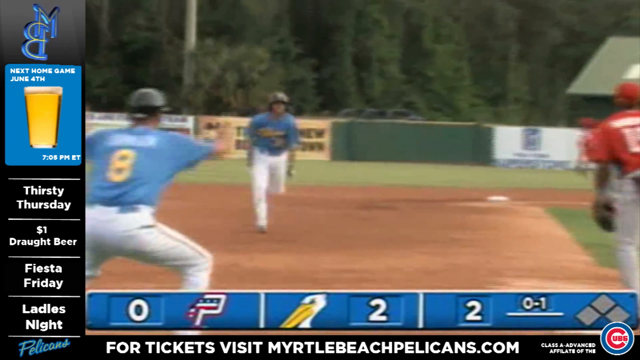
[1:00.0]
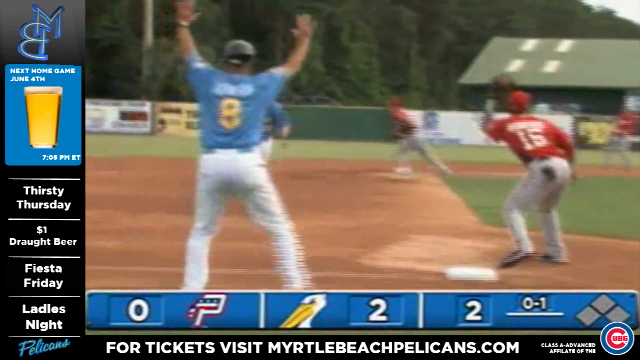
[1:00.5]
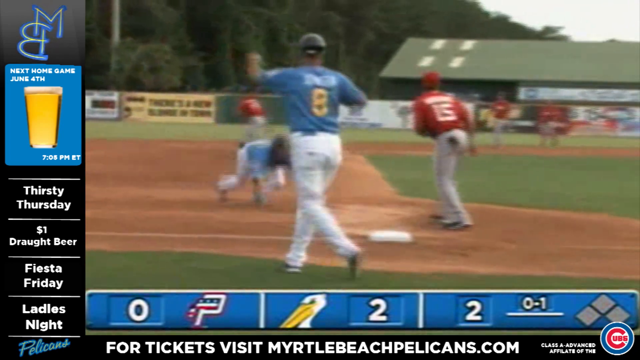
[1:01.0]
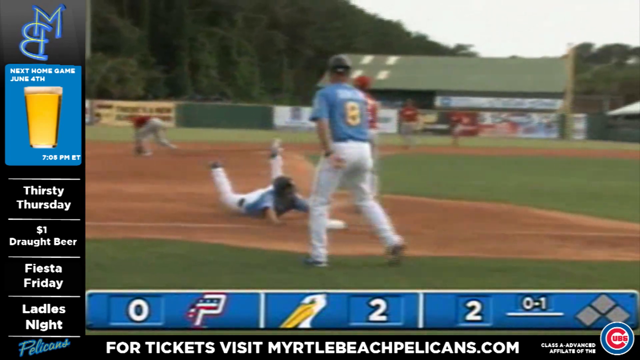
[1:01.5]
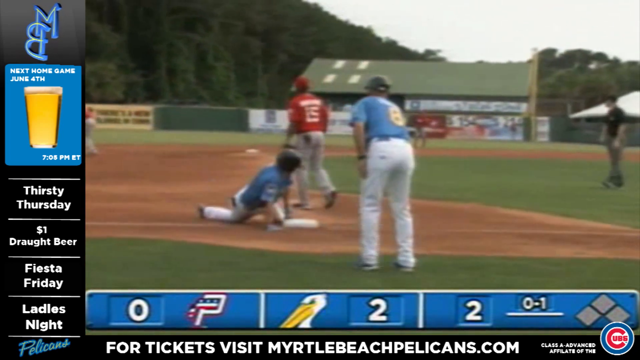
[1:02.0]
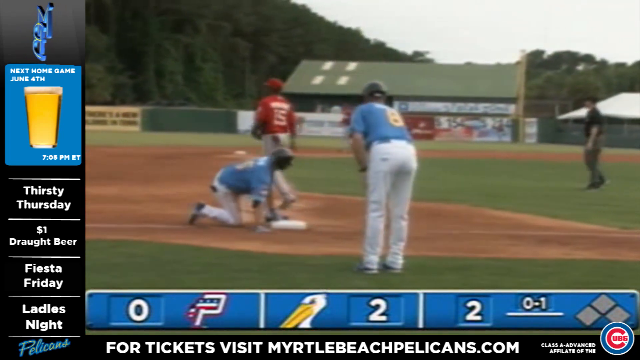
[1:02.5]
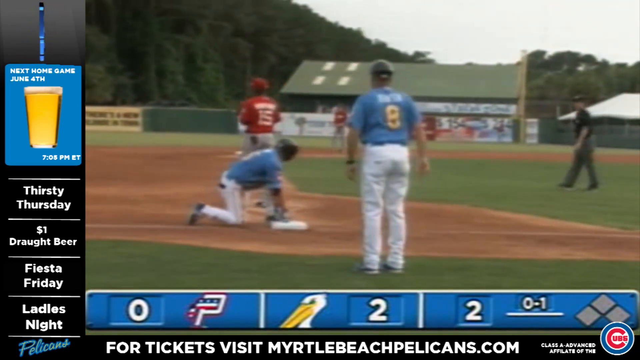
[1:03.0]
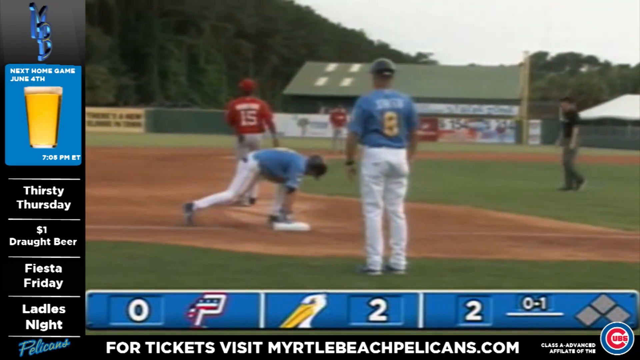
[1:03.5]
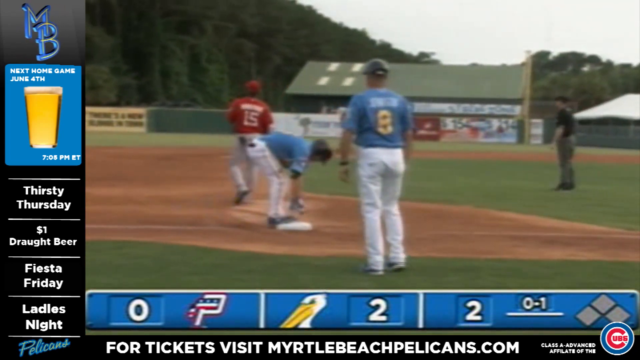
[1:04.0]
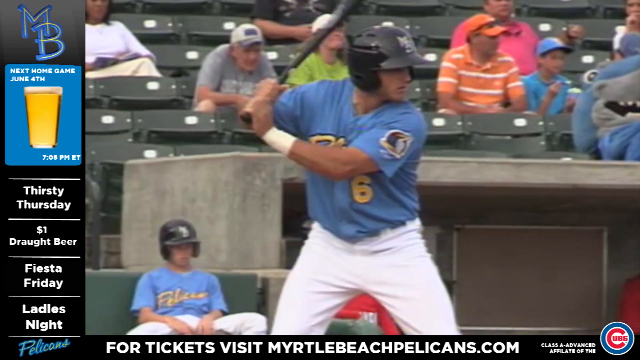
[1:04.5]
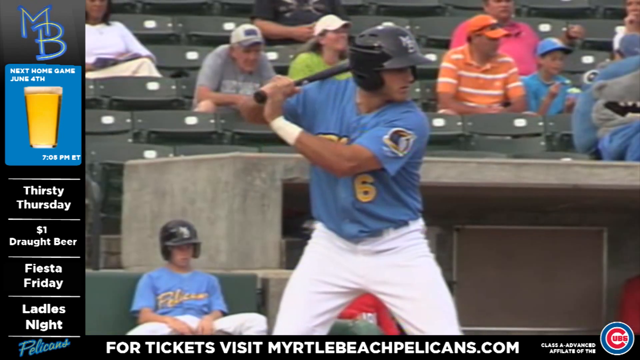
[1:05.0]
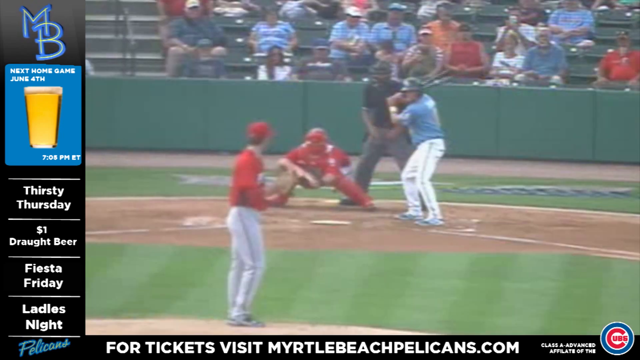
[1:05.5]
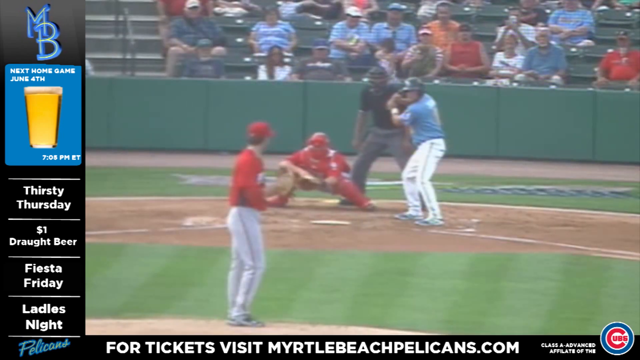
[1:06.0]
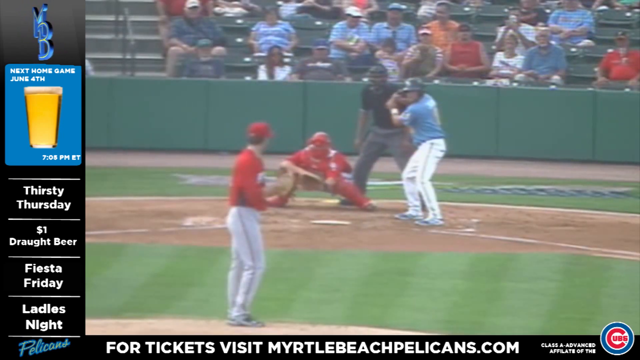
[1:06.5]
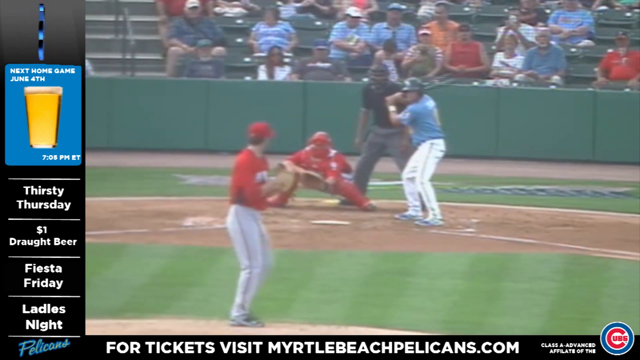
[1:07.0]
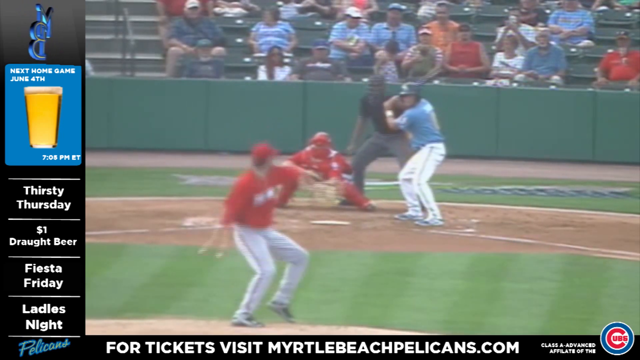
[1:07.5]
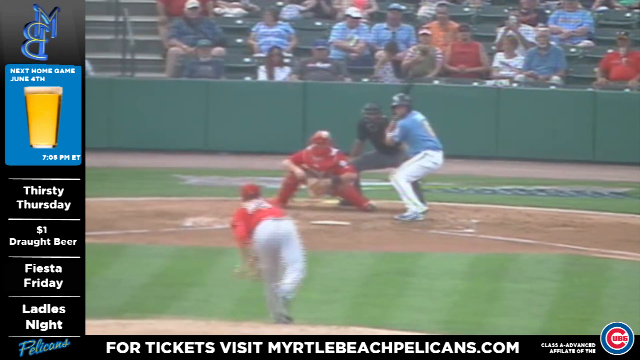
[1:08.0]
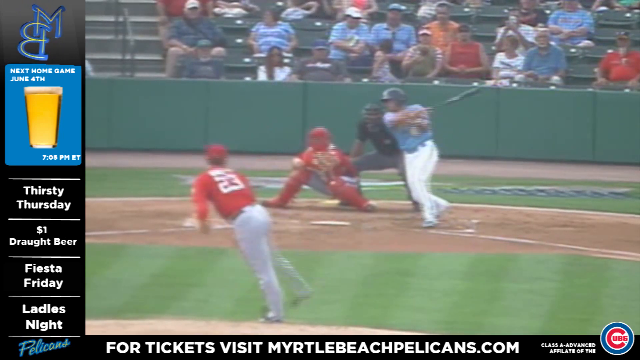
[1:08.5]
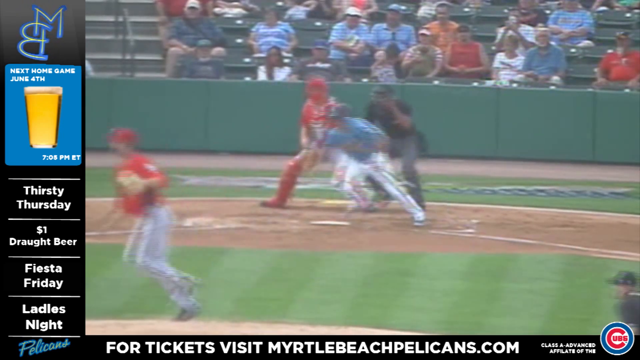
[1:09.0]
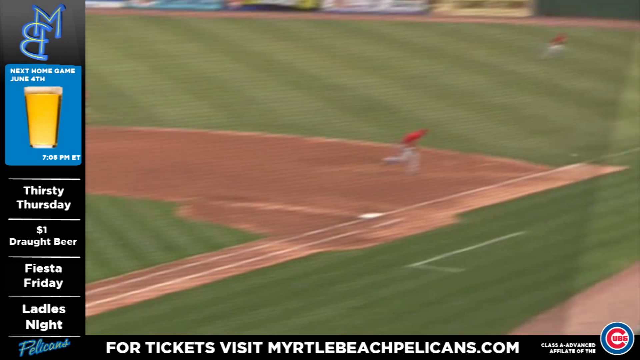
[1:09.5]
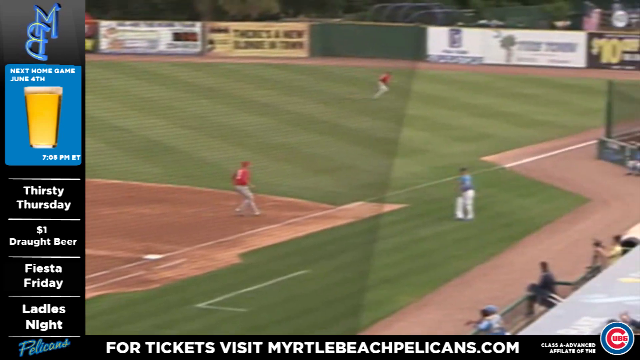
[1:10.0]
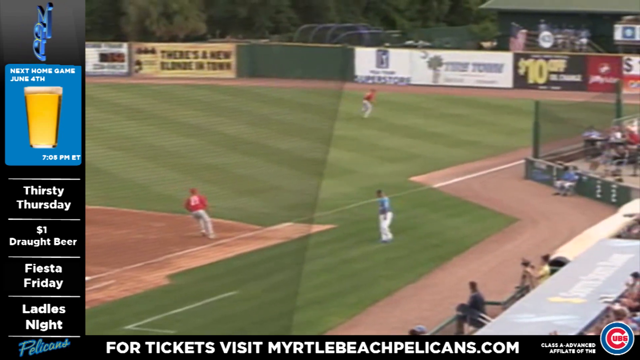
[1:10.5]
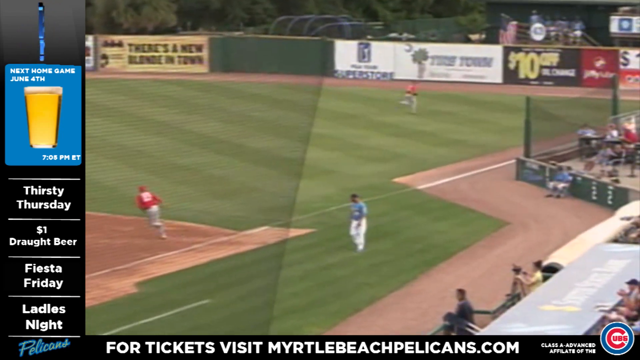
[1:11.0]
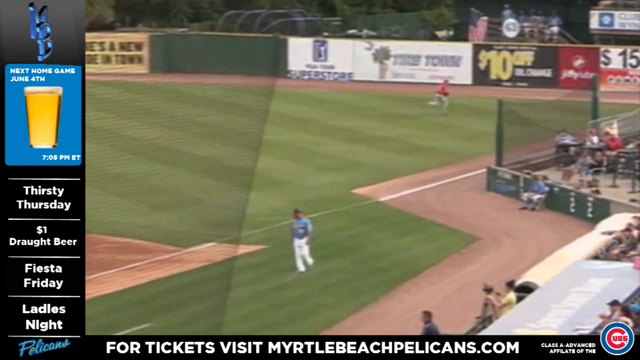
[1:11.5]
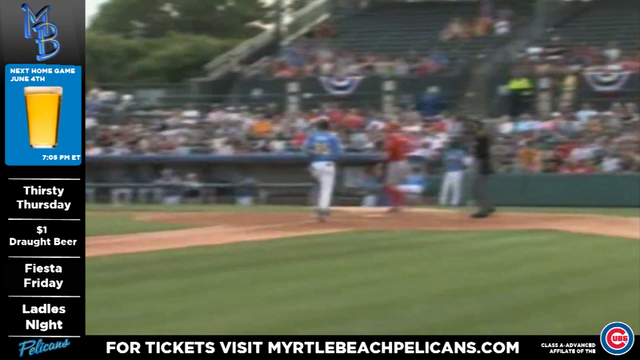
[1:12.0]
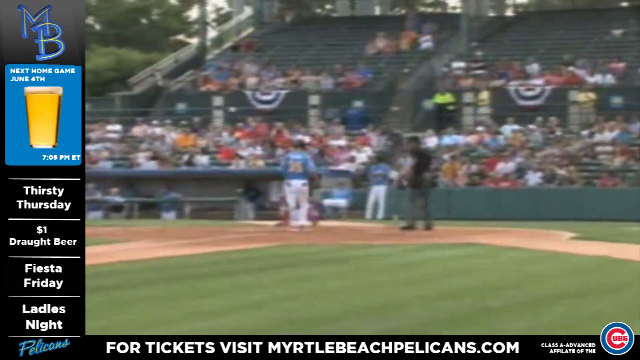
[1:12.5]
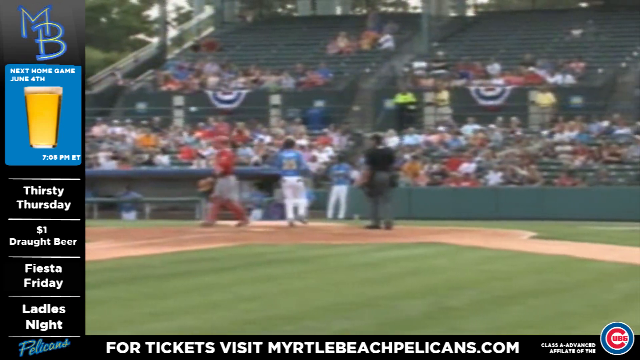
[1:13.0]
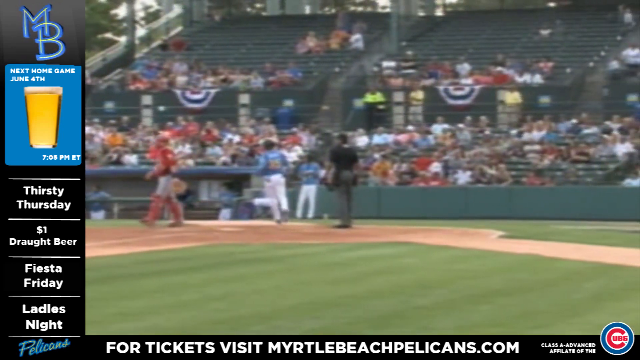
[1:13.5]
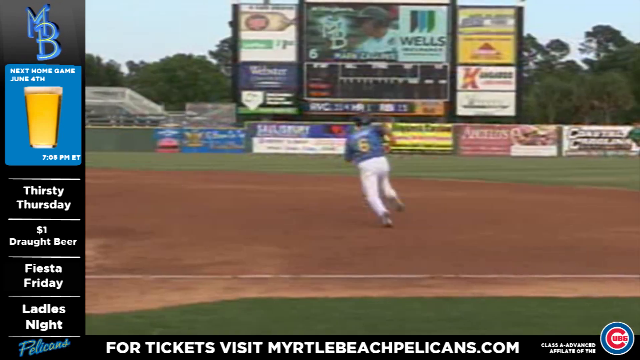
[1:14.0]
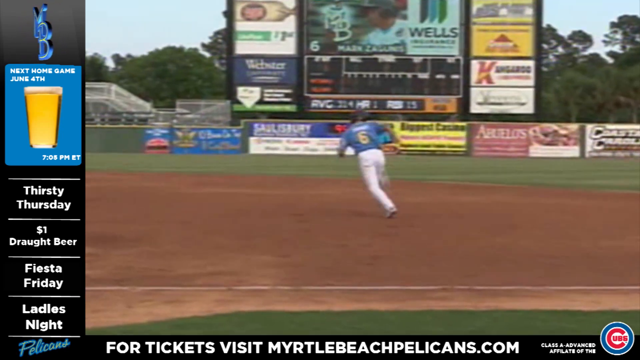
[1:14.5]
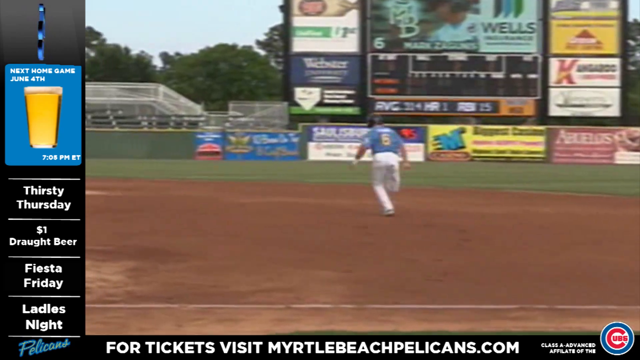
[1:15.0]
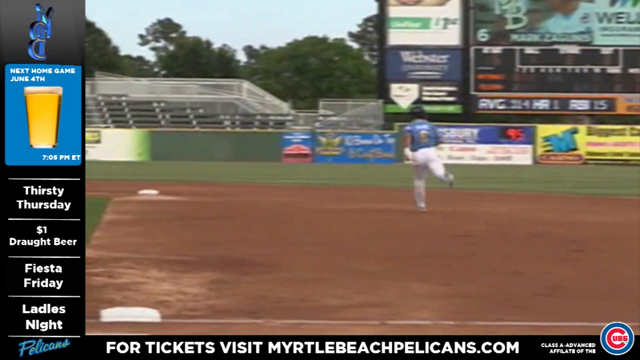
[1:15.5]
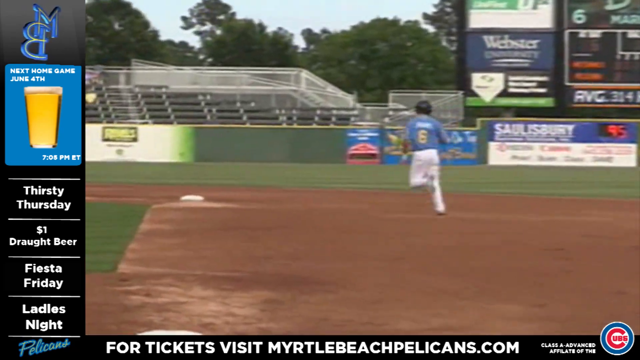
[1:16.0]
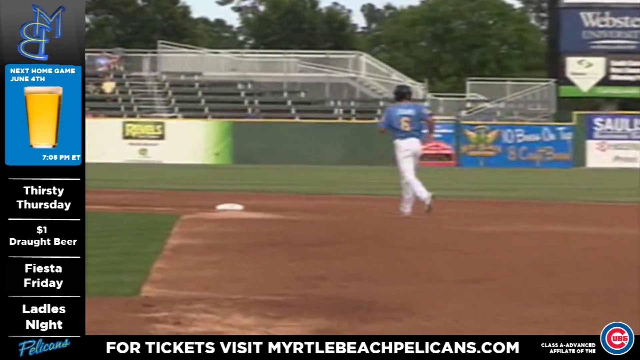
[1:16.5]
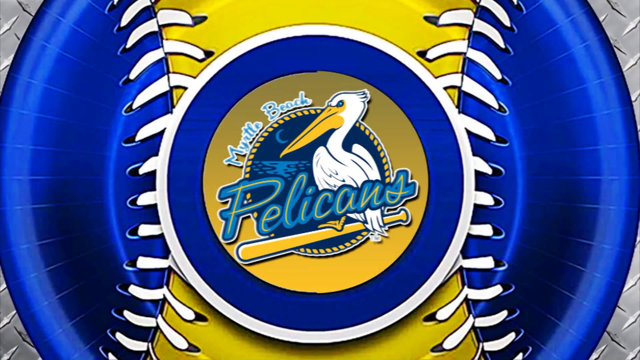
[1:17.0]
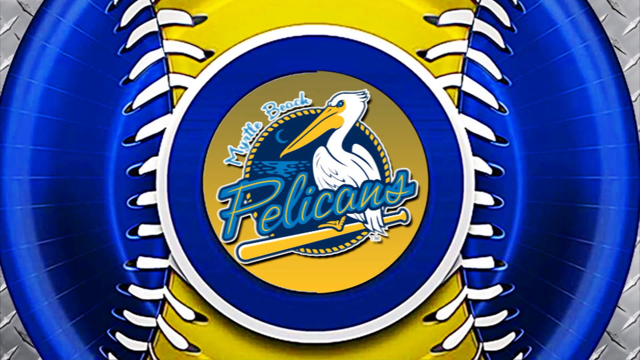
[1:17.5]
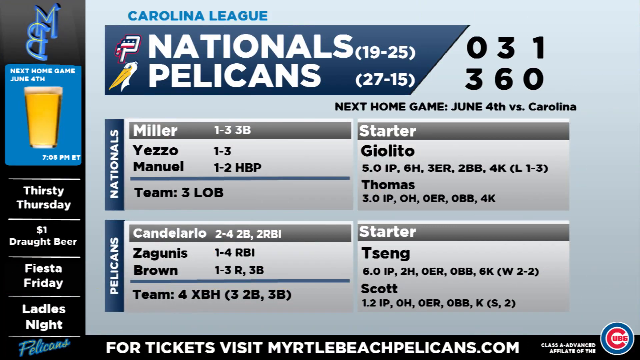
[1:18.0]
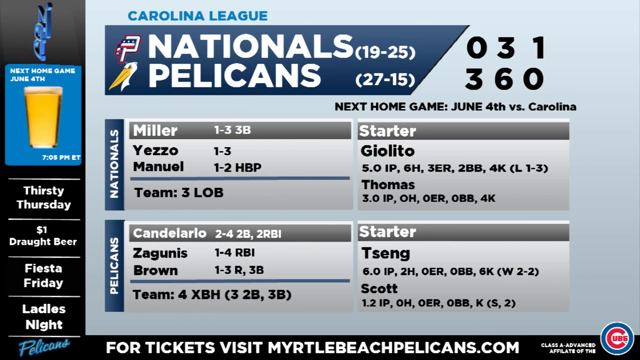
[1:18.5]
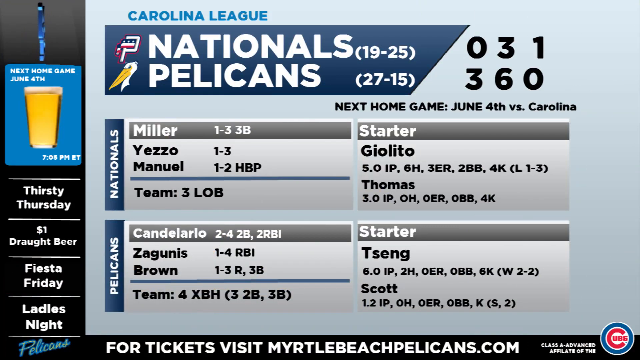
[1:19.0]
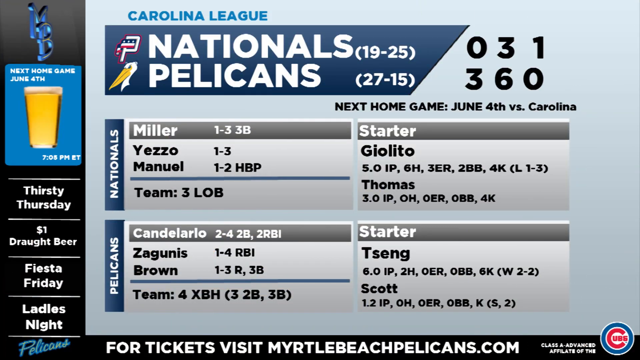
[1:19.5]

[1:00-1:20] The Pelicans are still playing and still winning, 2 to 0. The opposing team seems to have a P on its uniforms, which look red, white and blue with white stars. The runner who was mid-run makes it safely to the next base. The pitcher pitches again, a Pelicans player gets the ball, and the team is whooping. Number six runs to the next base as well. The footage closes on the Pelican symbol, and a stats display opens reading "Carolina League" with the Nationals and the Pelicans. In parentheses on the right, the Nationals show "19-25" and the Pelicans "27-15." In black next to the Nationals are the numbers 0, 3, 1, and underneath, next to the Pelicans, are 3, 6, 0. Text reads "next home game, June 4th versus Carolina," and a Nationals player named Miller is listed with numbers.